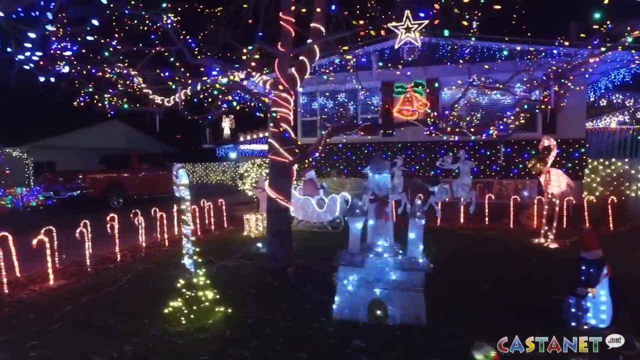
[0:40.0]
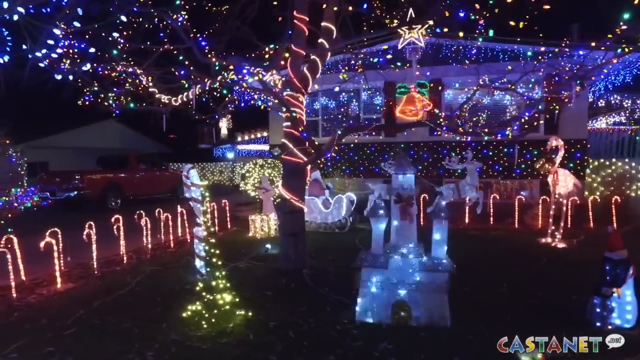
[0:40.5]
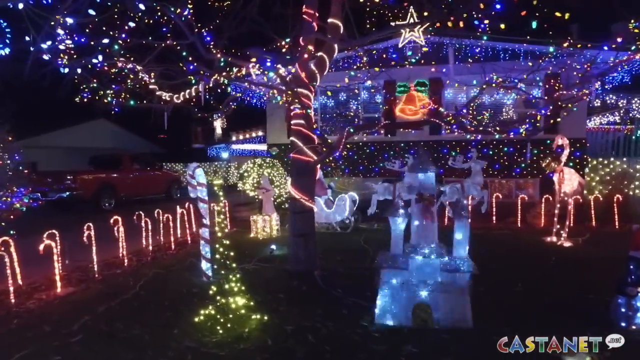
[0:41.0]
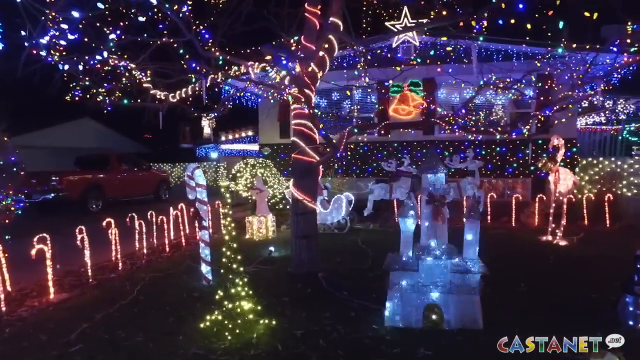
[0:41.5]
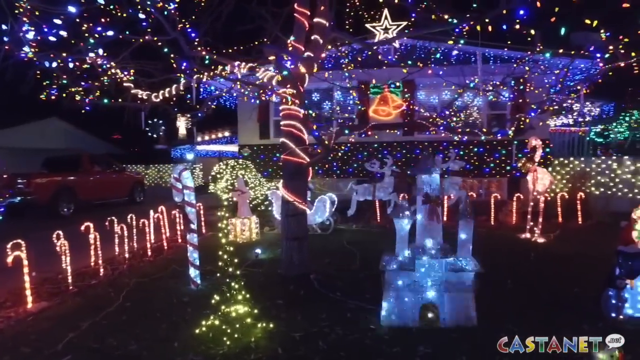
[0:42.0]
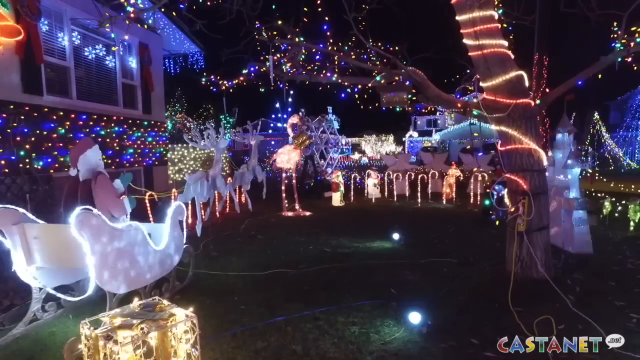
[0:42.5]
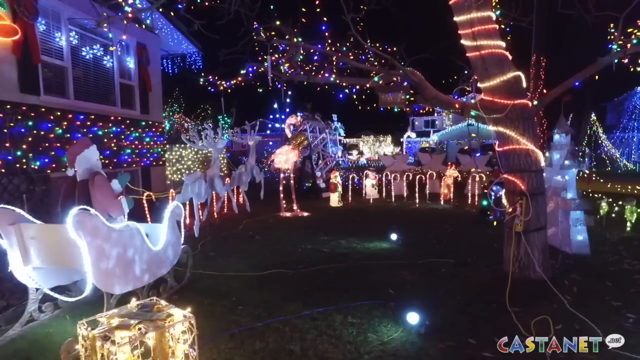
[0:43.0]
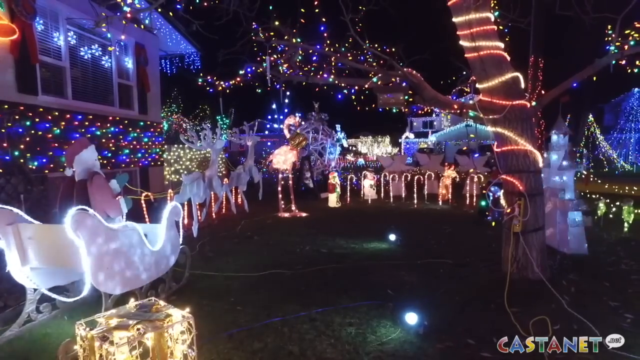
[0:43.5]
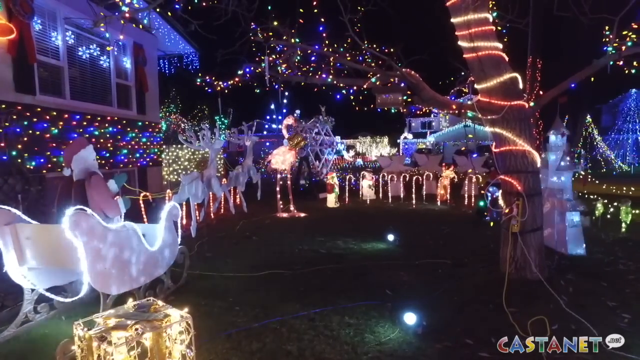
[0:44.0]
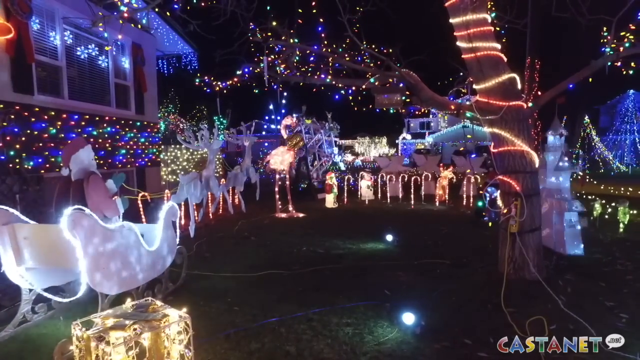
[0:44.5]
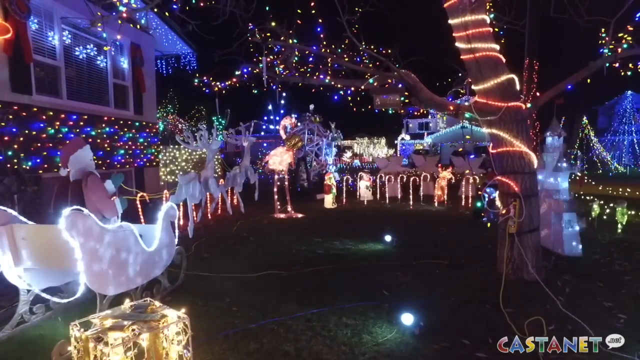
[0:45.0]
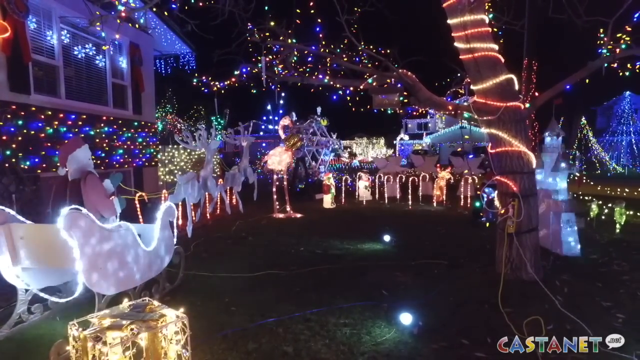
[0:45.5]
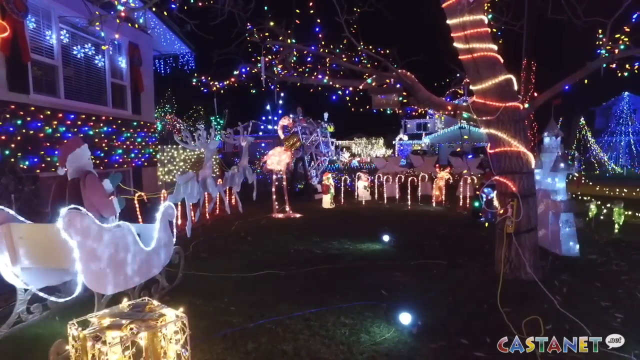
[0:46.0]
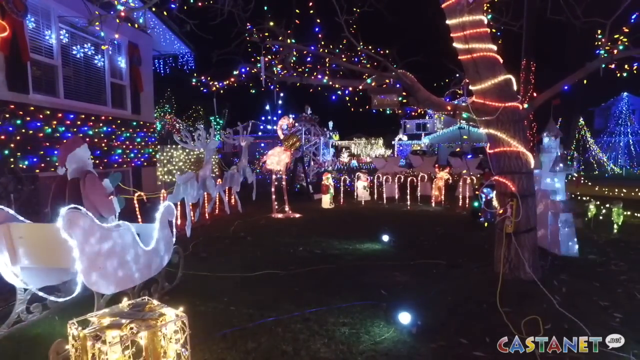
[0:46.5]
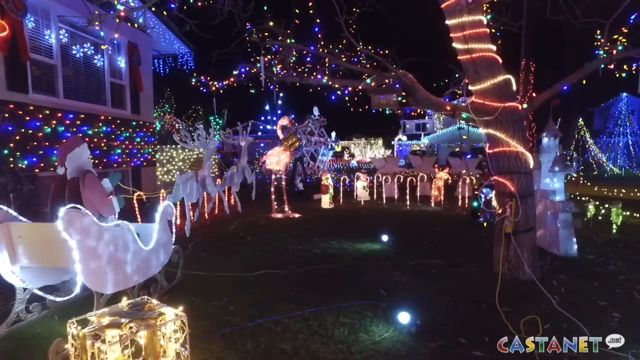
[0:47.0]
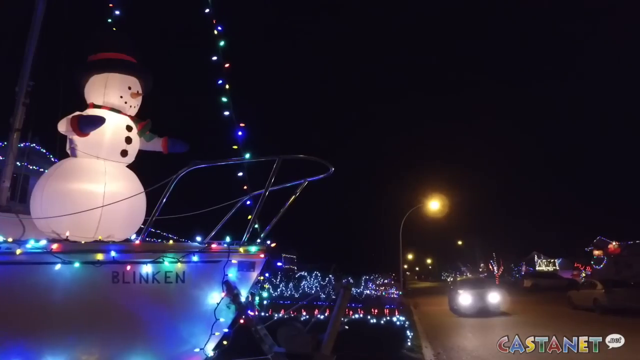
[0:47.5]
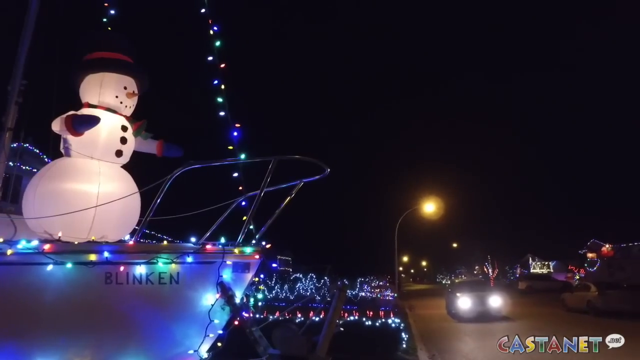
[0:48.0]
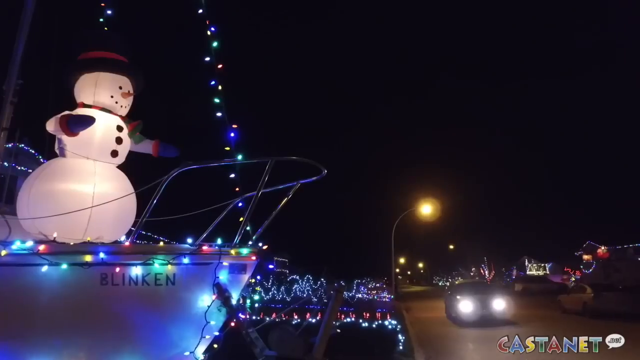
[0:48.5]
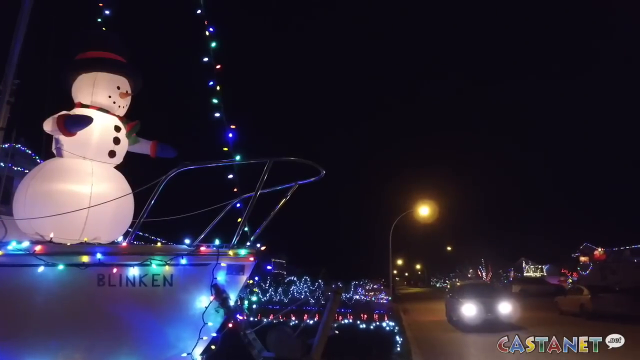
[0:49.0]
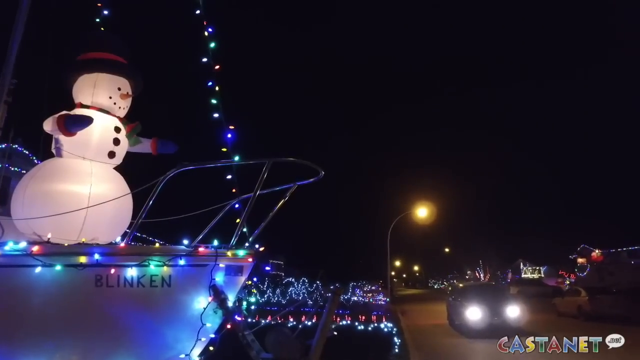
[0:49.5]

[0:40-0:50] A house has lit-up bells in the window and a star on the very top. Some candy canes are down at the bottom on the ground, along with a lit-up bird, what looks like a castle with lights in it, and more candy canes on the right side. A tree also has lights on it. The camera angle slowly moves, then flips to a different direction showing a bird and a windmill with lights on it, and a big snowman on a boat pops up in a different scene. The lit castle flashes really fast, the windmill turns pretty slowly but can be seen moving, and the snowman kind of wobbles, as it is a blow-up snowman that moves with the wind. What look like bigger bulbs are attached to the house. The boat has words on it starting with a B, but they go by too fast to read. There is also a white sled with Santa in it, wearing his usual outfit, and a streetlight by the boat farther down.